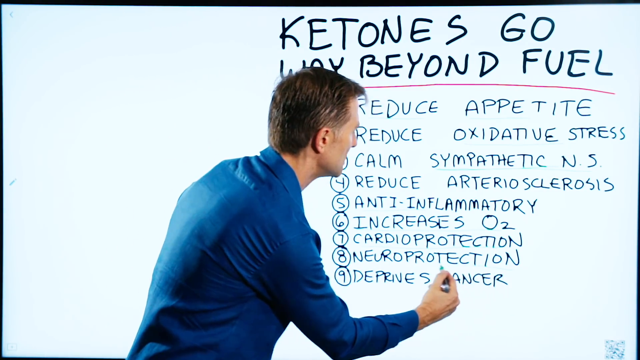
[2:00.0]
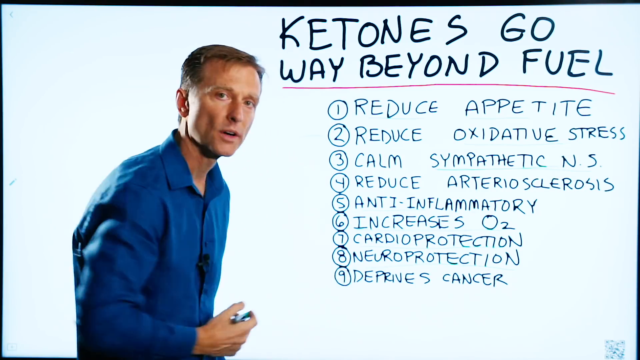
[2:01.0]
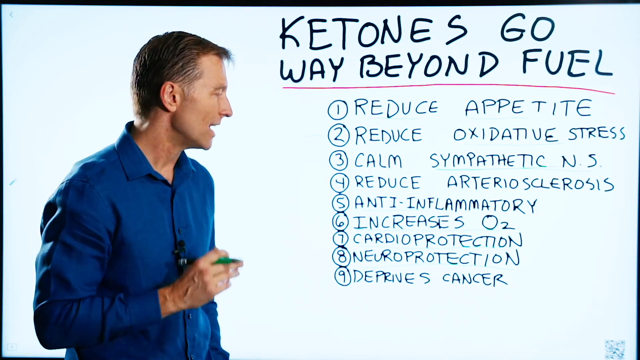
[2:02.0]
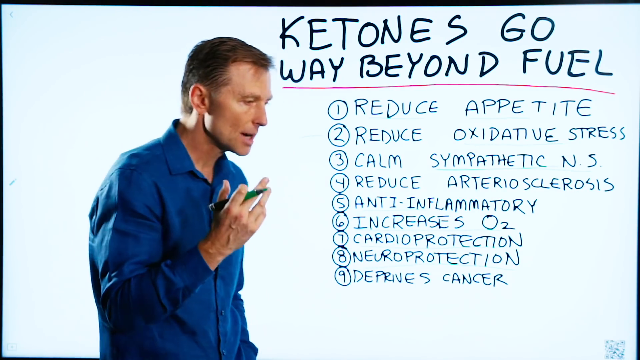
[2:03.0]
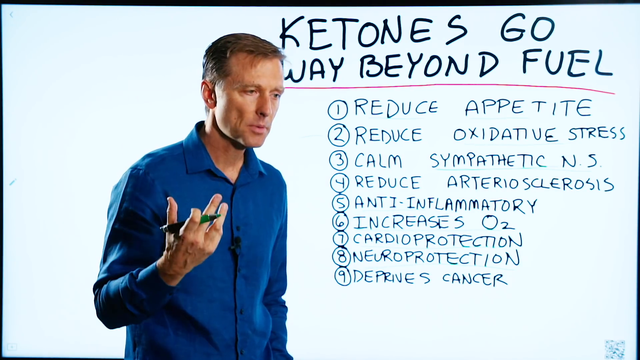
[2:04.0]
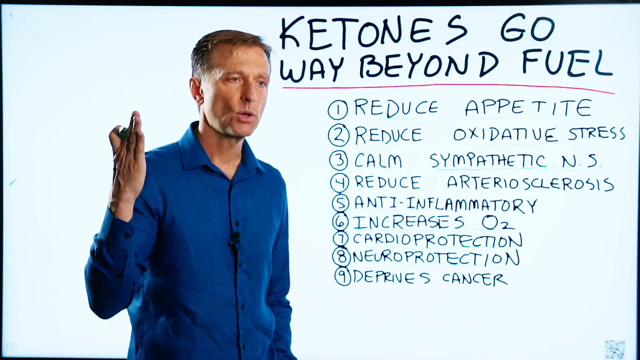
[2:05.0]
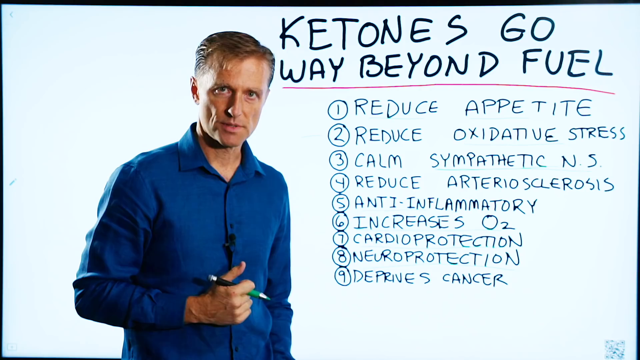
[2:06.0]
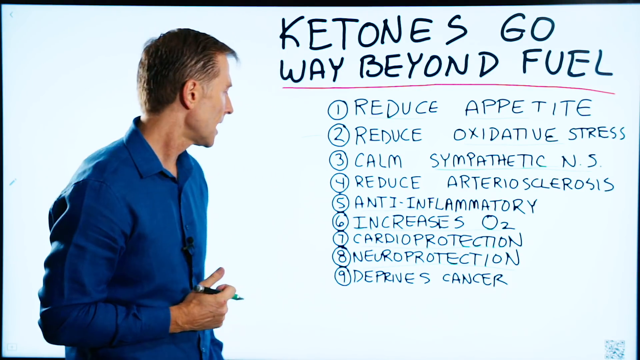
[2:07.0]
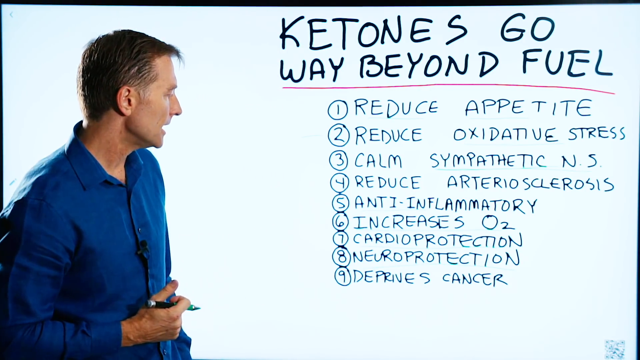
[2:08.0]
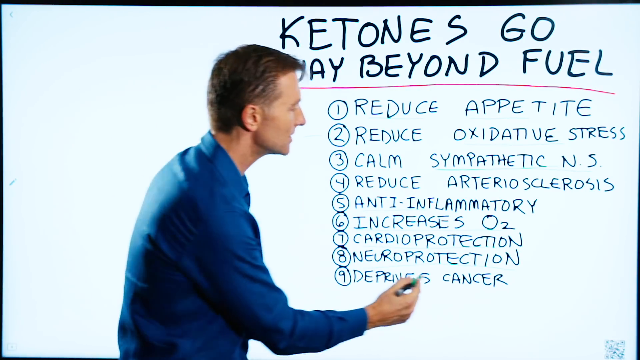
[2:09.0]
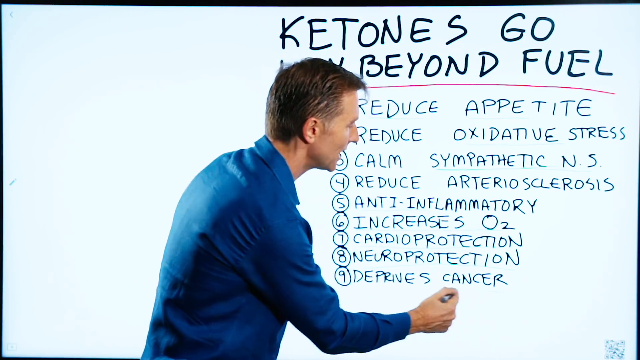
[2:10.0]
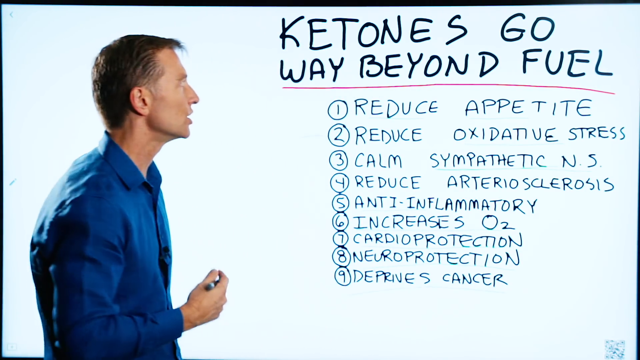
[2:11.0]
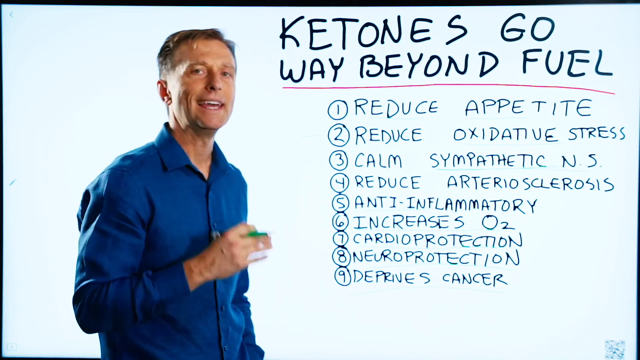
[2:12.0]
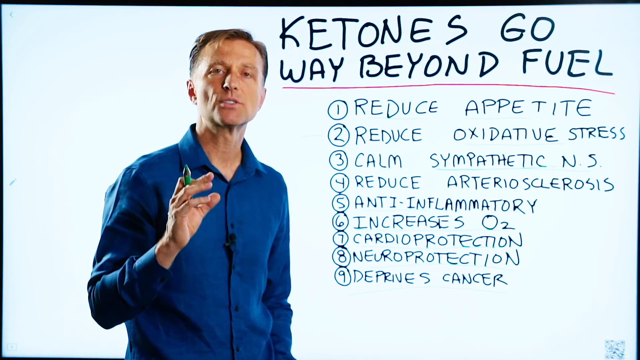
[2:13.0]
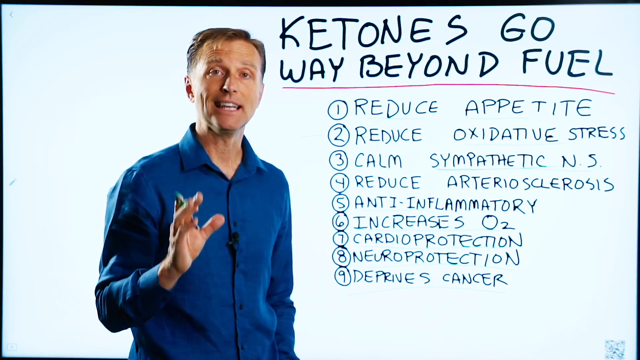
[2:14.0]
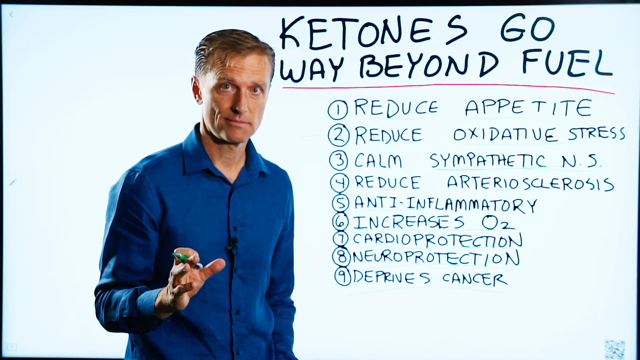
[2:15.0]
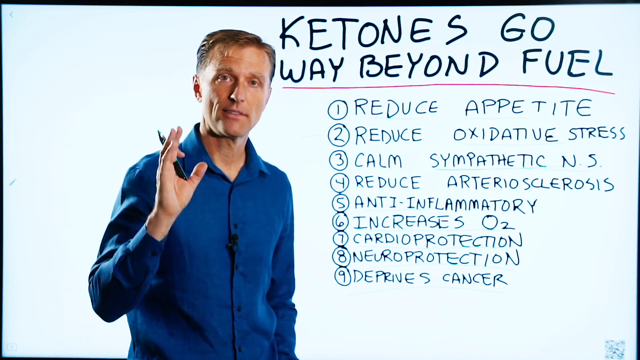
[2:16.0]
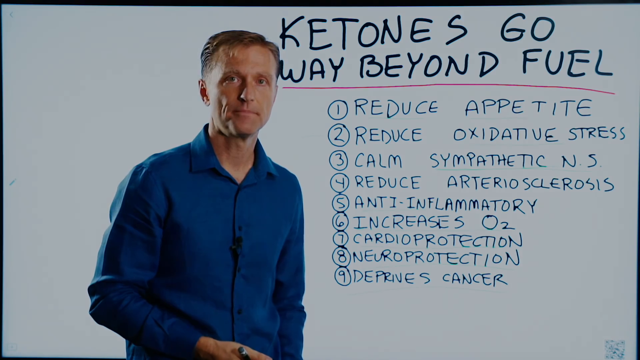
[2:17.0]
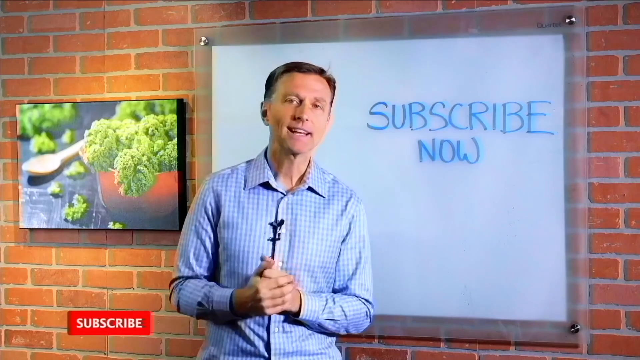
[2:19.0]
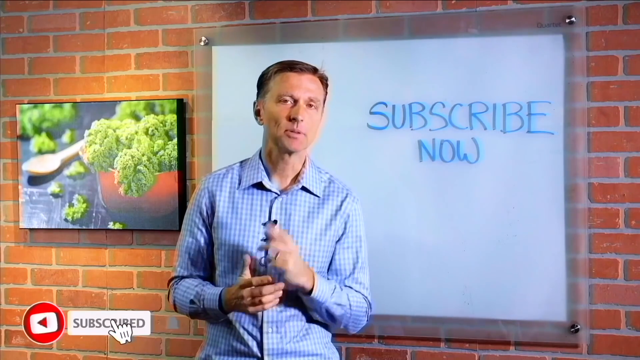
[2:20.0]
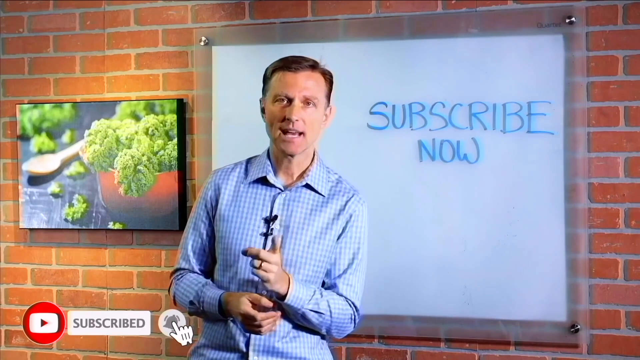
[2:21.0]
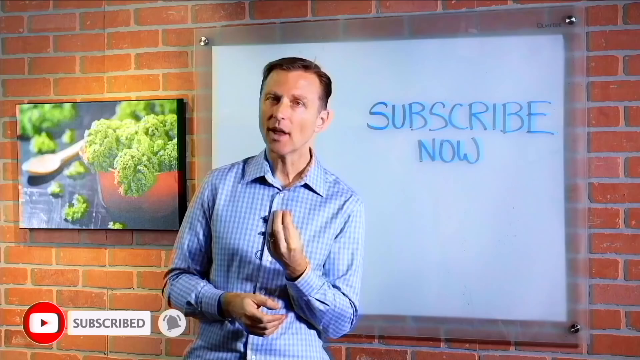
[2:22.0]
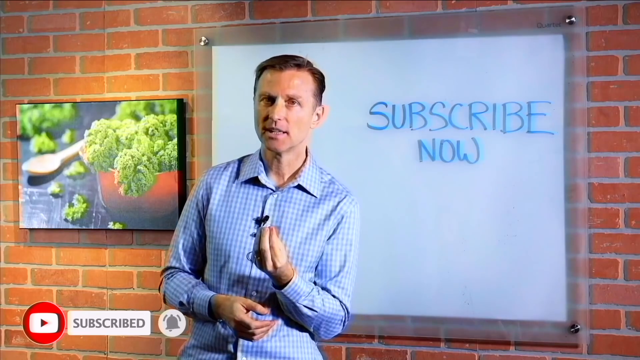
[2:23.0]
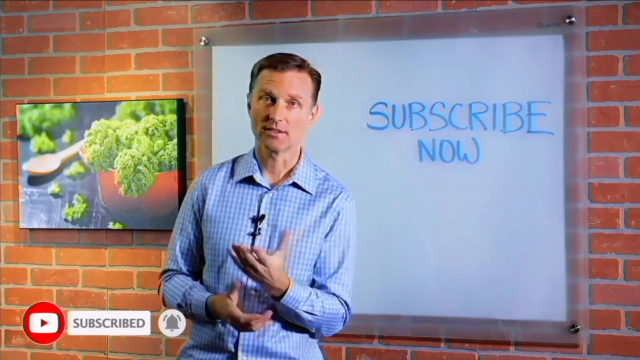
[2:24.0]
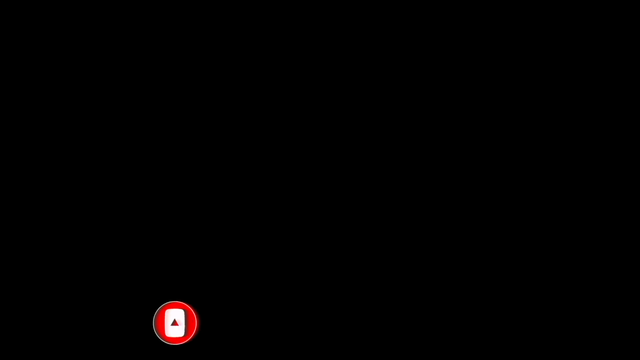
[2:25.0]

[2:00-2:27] The same man seems to speak emphatically about his next point, "deprives cancer", saying quite a few words. There are no graphics in this section, only the man speaking, and he seems to brush past the point quickly. At the end of the video he appears in a new shirt in front of a new background, by a brick wall with a whiteboard; there is a photo on the wall of something in a bowl that is hard to identify and is not broccoli. He says "subscribe now".